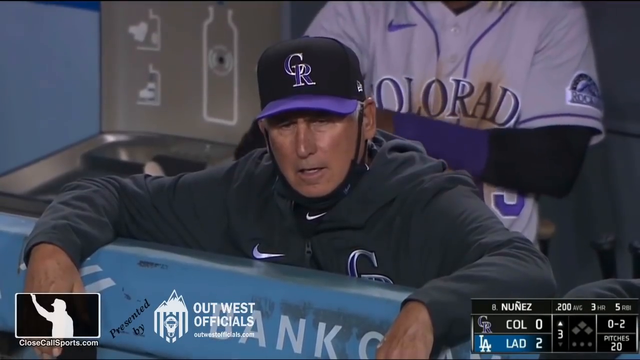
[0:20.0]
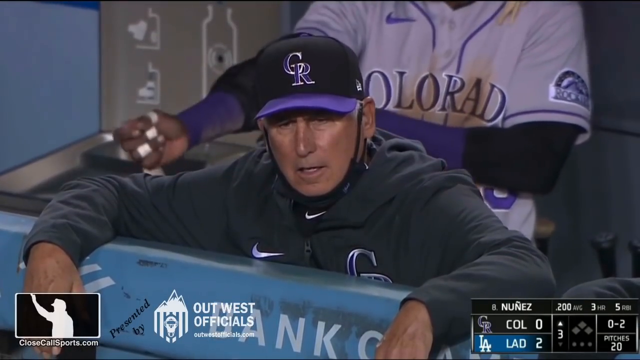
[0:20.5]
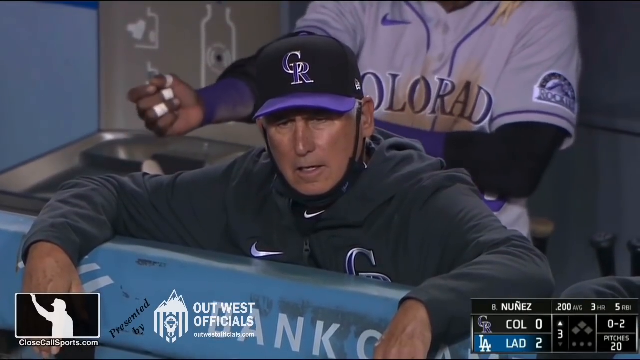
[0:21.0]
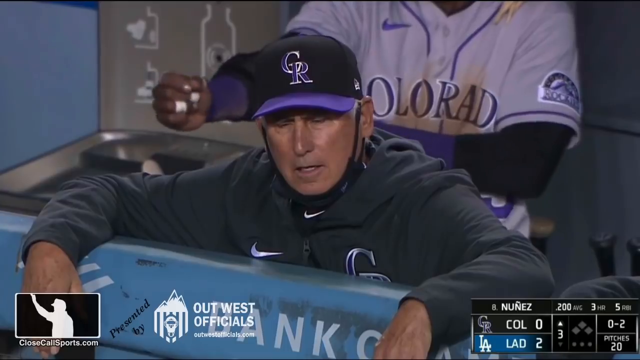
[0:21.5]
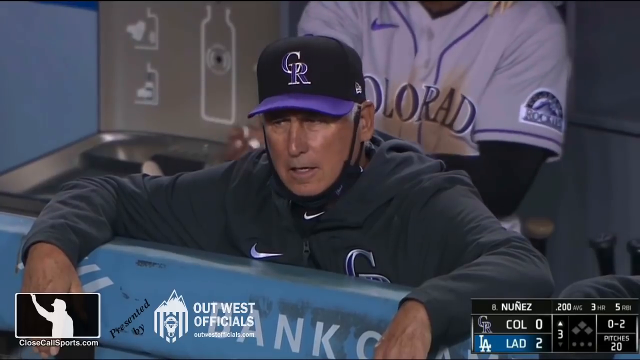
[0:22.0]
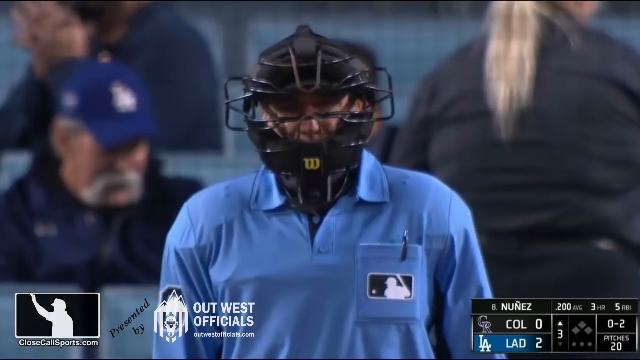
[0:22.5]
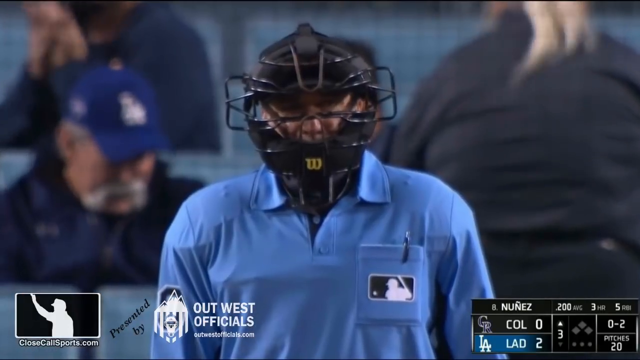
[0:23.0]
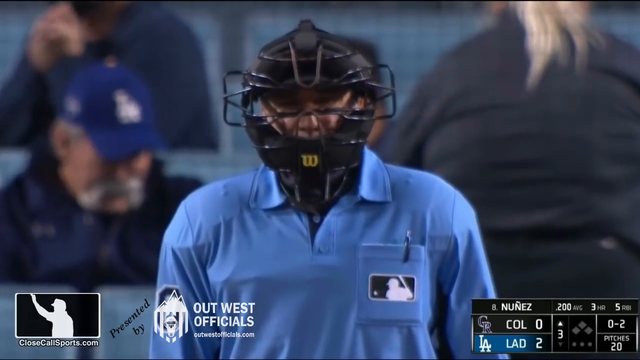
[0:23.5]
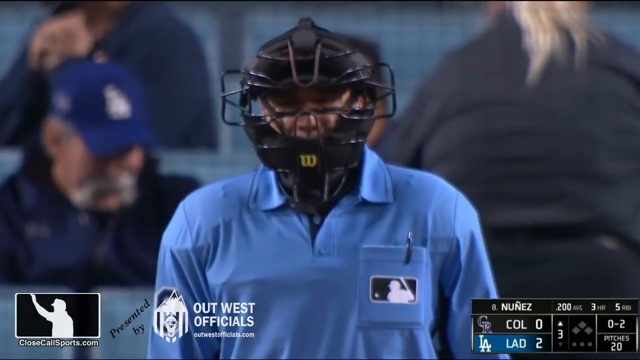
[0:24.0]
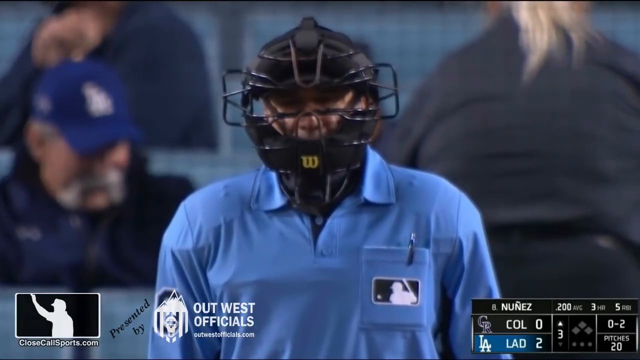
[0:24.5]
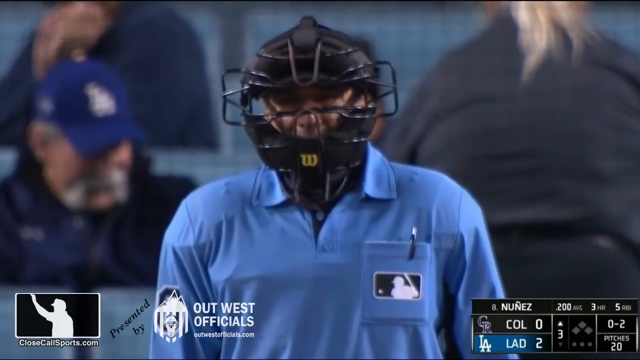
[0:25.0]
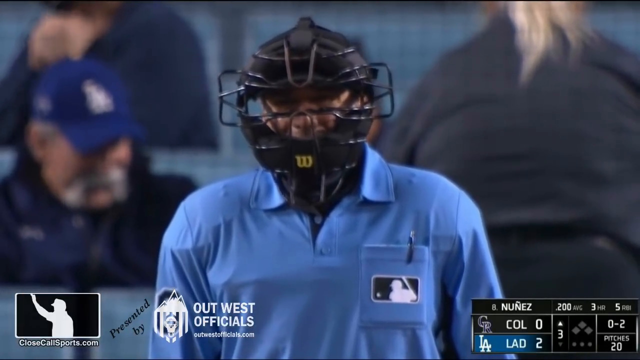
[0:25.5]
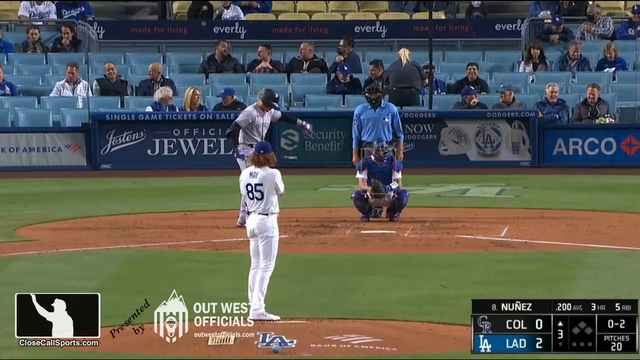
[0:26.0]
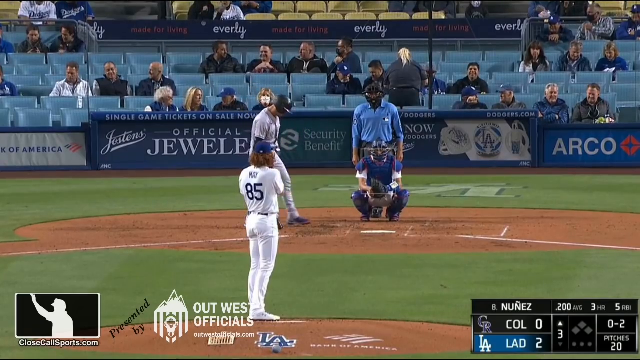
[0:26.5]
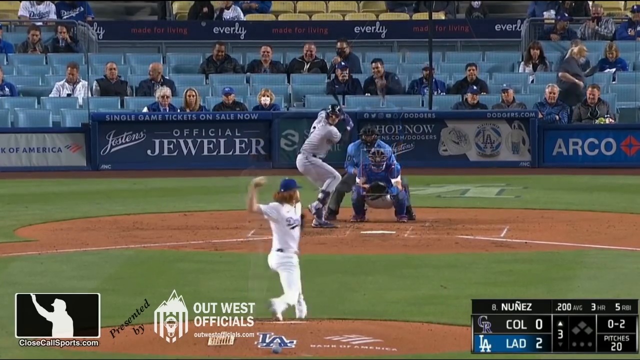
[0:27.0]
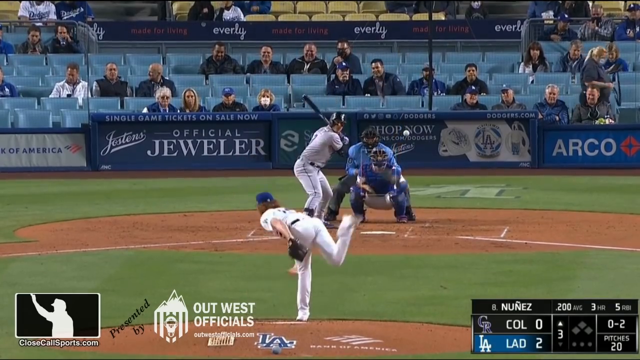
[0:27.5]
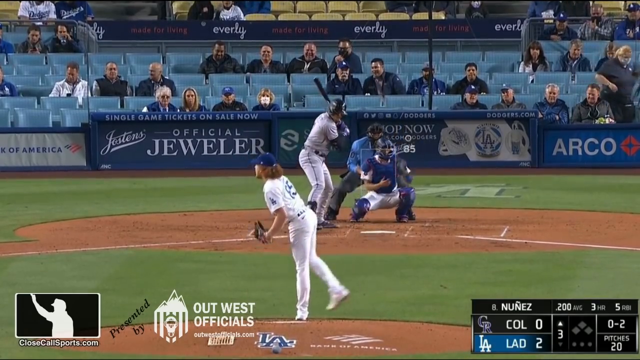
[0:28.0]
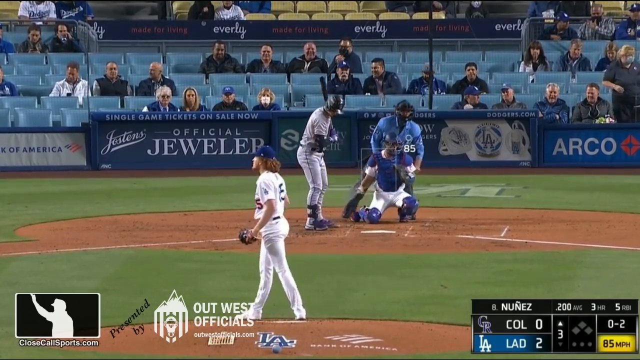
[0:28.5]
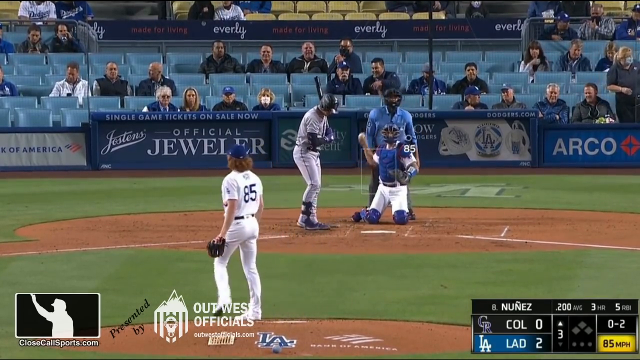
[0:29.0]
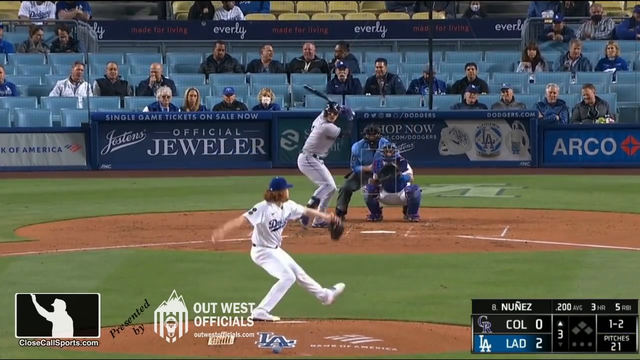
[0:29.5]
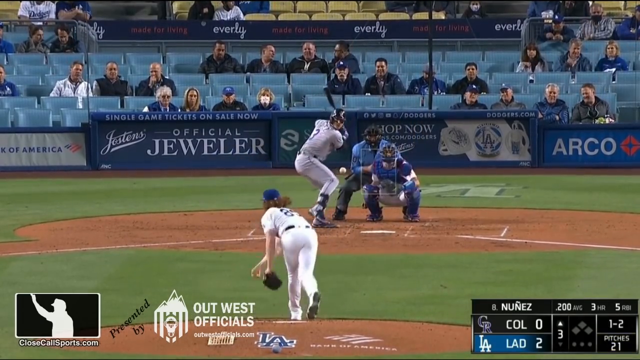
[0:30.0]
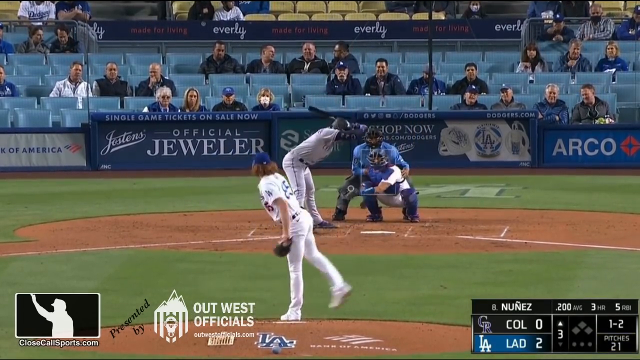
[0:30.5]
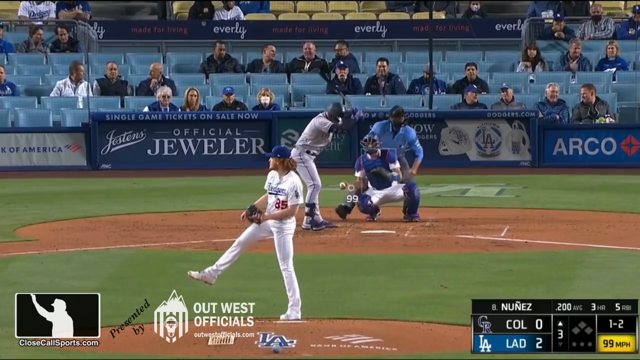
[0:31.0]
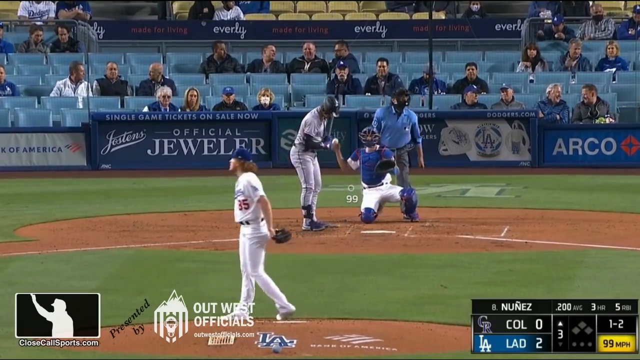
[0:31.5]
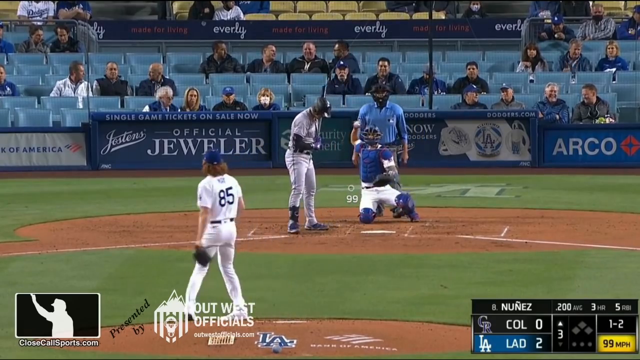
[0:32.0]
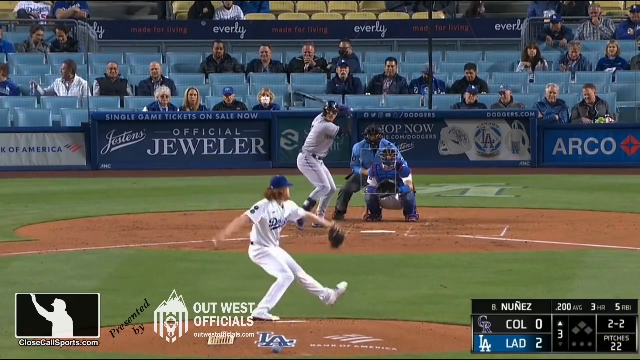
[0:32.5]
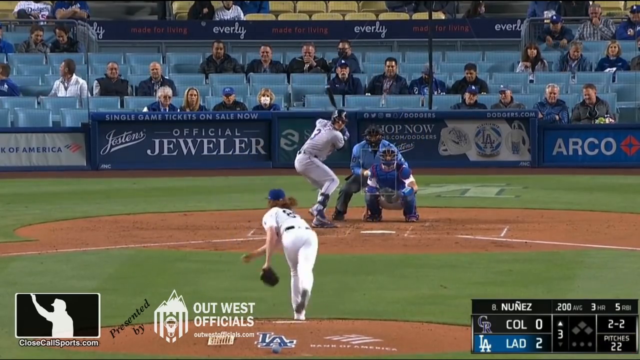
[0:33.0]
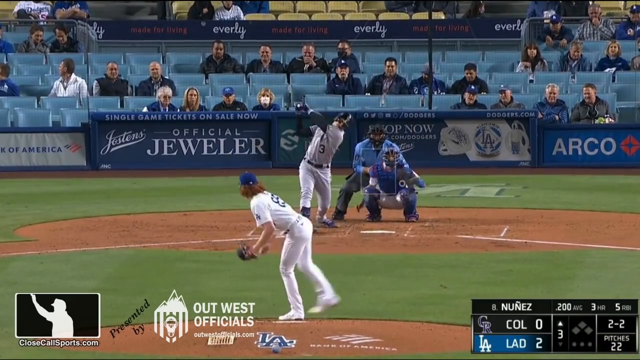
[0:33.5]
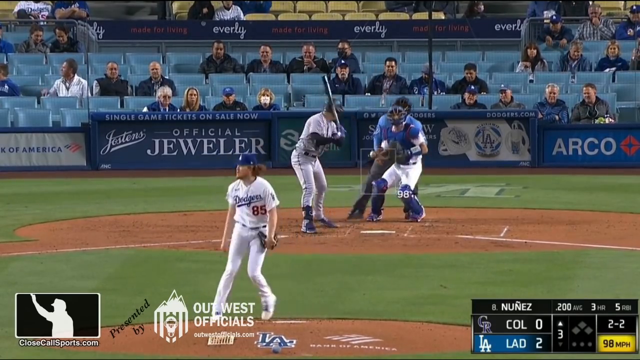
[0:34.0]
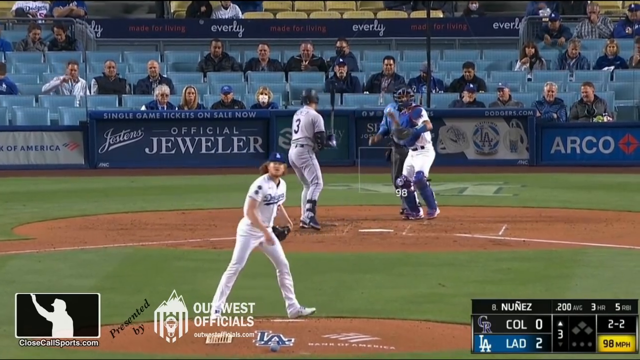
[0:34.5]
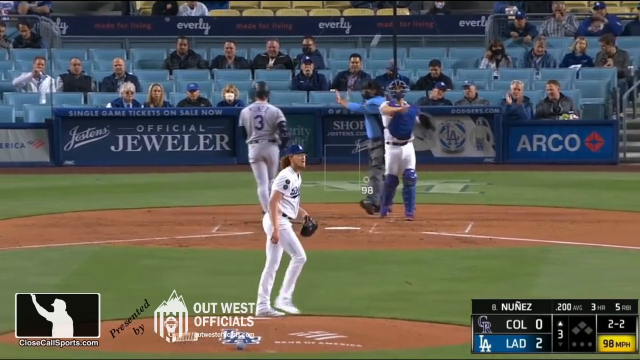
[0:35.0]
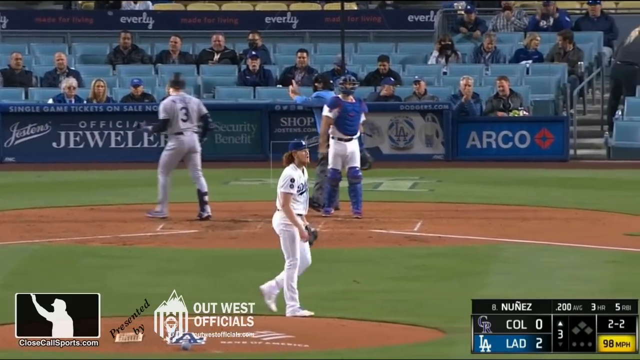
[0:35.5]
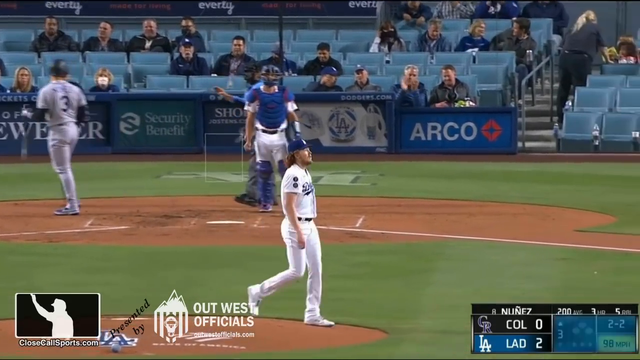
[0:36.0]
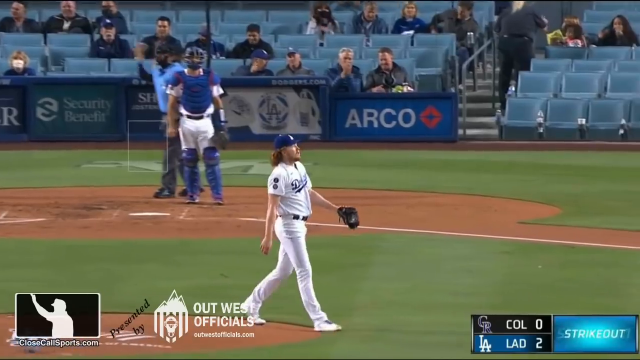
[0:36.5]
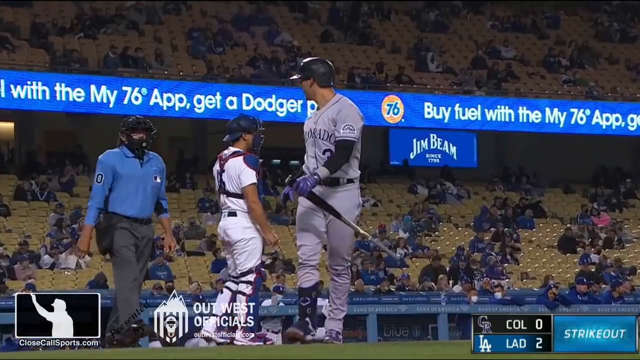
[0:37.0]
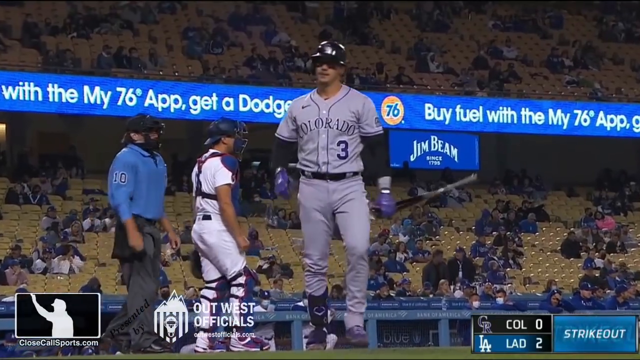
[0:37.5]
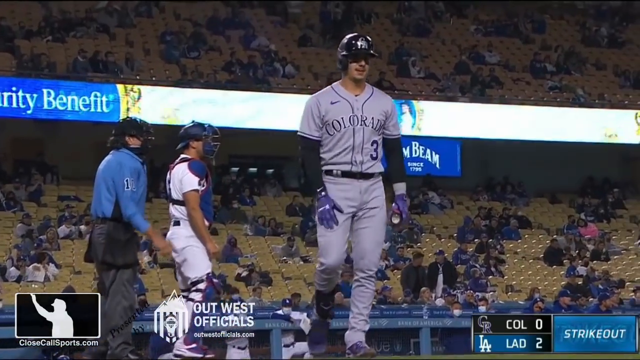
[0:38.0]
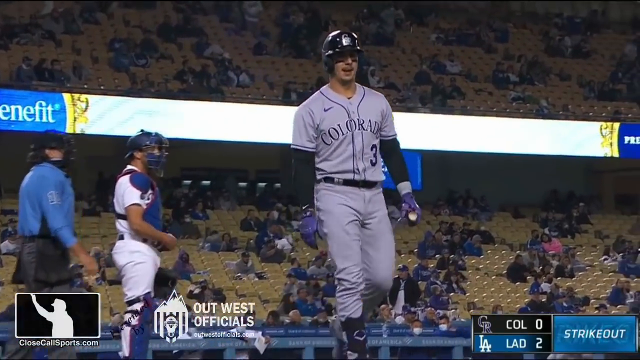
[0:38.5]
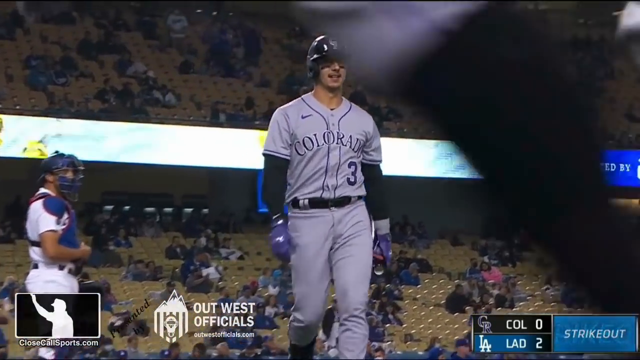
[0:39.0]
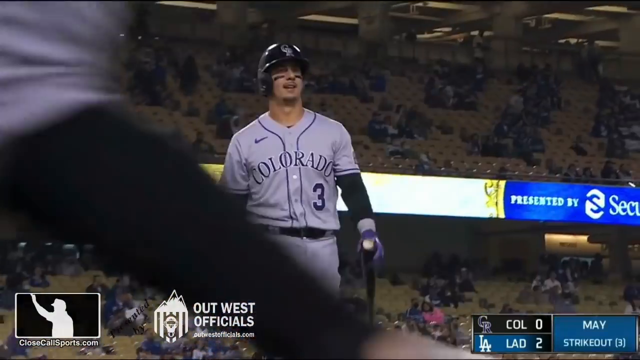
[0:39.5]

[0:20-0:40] The camera zooms to the Colorado Rockies manager. The game appears to take place during the COVID era, since there are few fans, far between, and the coach is wearing a mask. It appears that Nunez was at the plate and had a strike called that was clearly a ball. The Rockies coach hangs his arms over the dugout fence, clearly upset with the call, and raises his hands before the camera pans back to the umpire, who has the MLB logo on his blue shirt, a dark mask, and padding underneath the shirt, just standing there. On the following pitches there are two balls, and the batter finally swings on the fourth pitch. The player is then visibly upset and chirping back toward the home plate umpire.